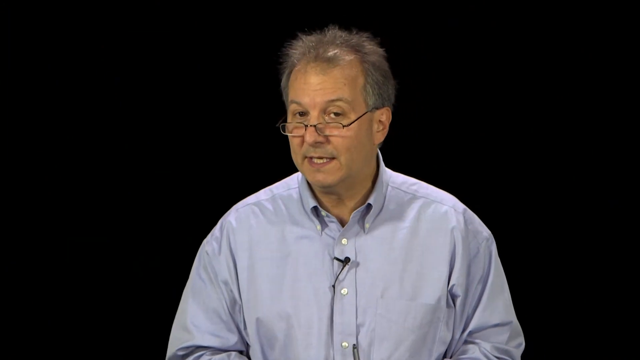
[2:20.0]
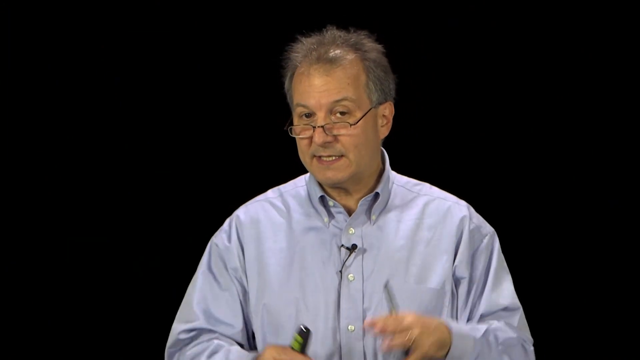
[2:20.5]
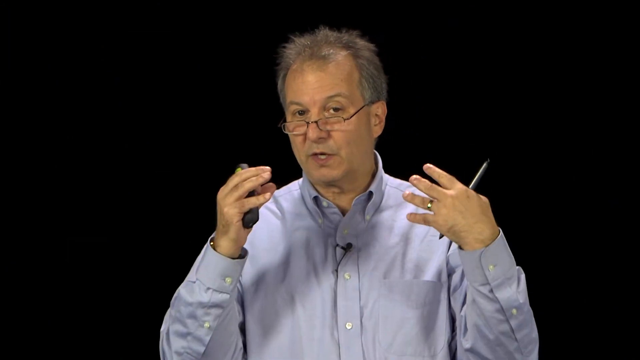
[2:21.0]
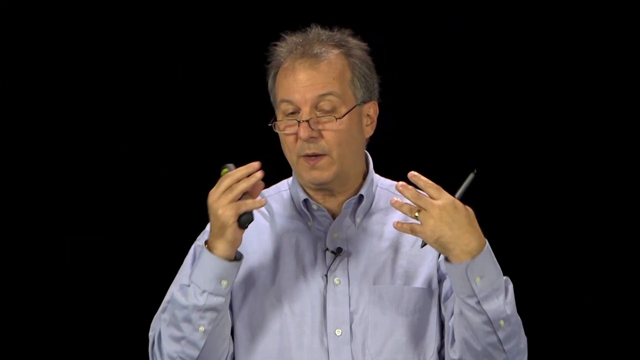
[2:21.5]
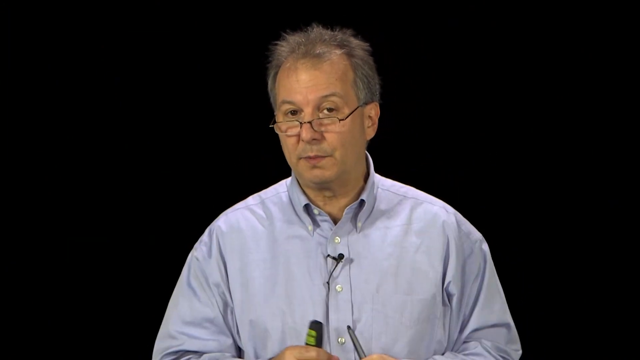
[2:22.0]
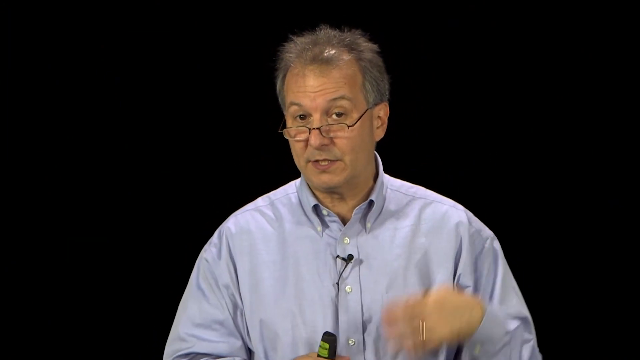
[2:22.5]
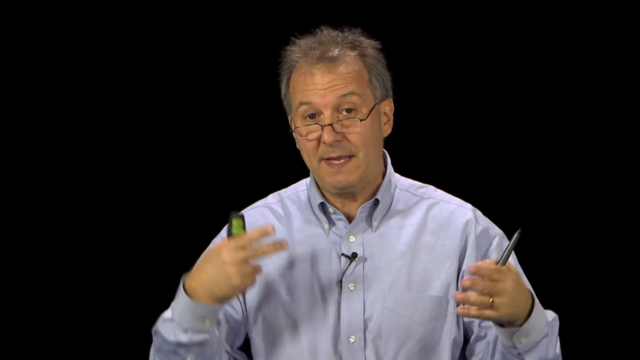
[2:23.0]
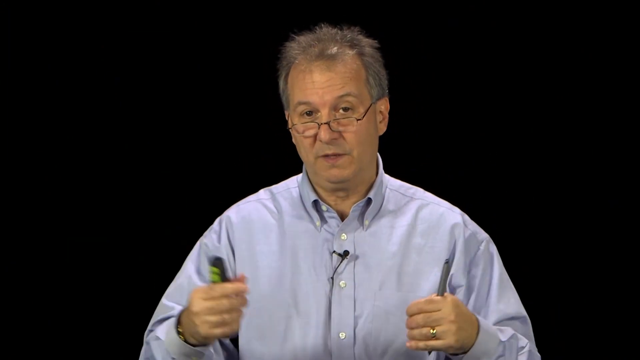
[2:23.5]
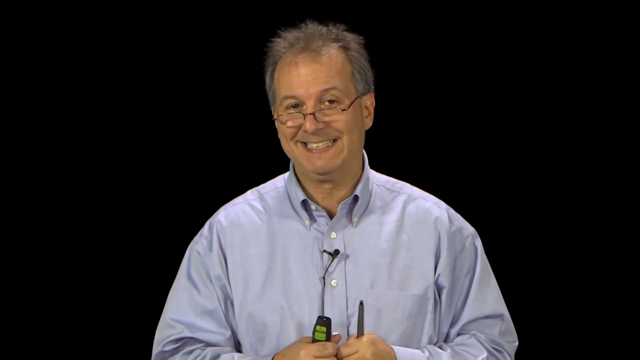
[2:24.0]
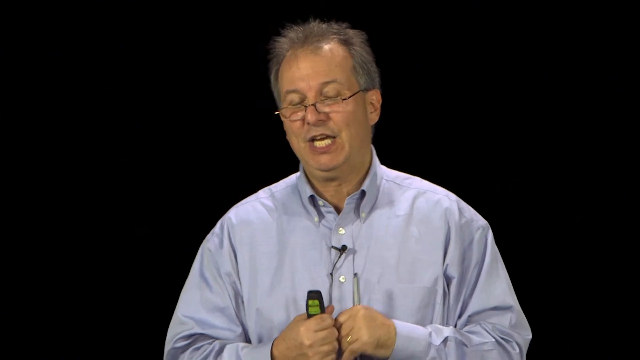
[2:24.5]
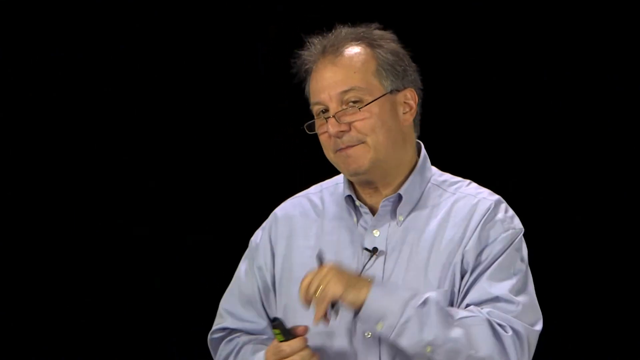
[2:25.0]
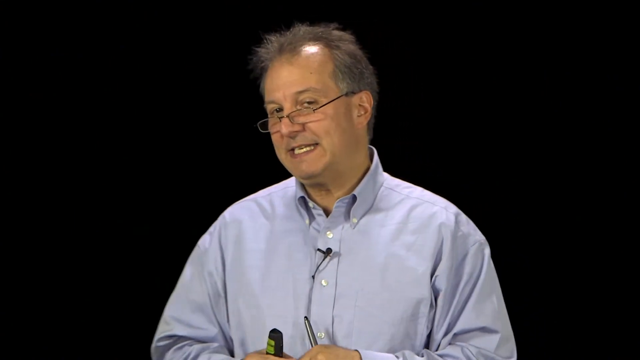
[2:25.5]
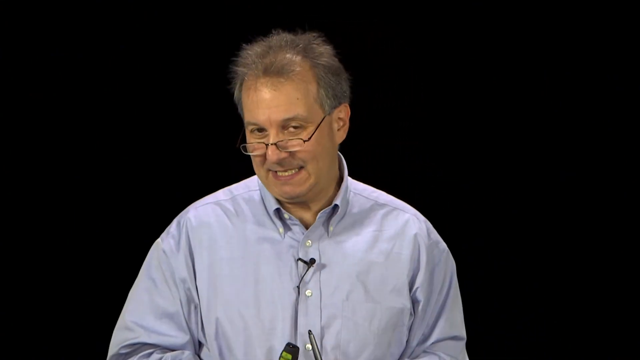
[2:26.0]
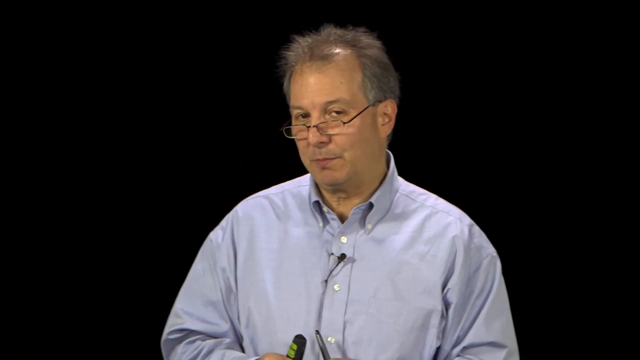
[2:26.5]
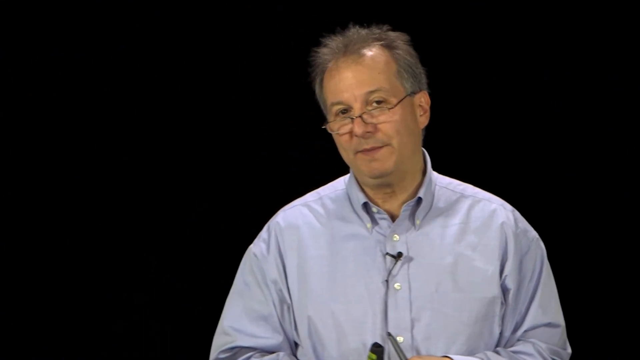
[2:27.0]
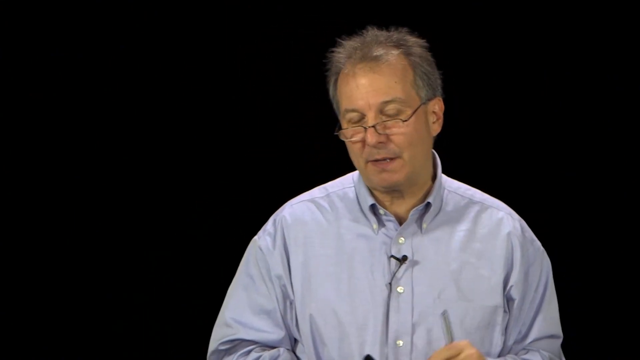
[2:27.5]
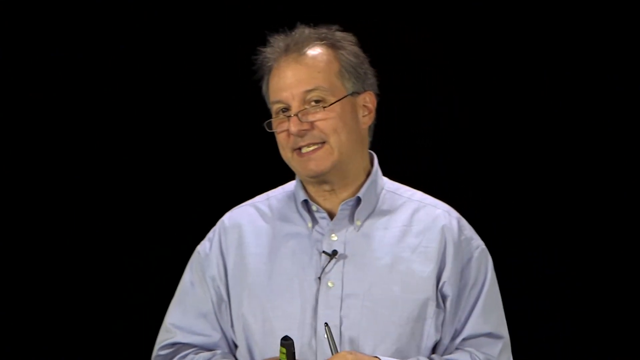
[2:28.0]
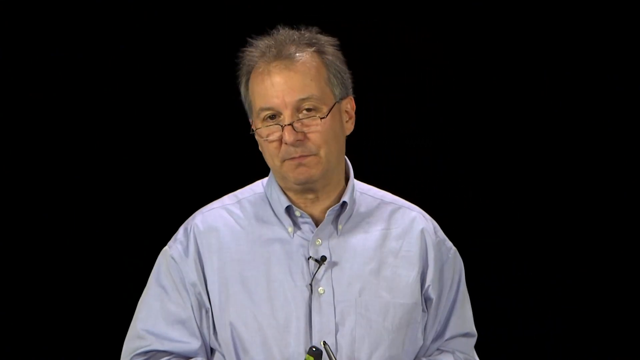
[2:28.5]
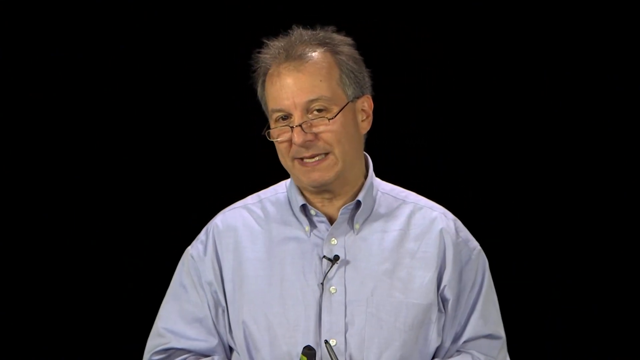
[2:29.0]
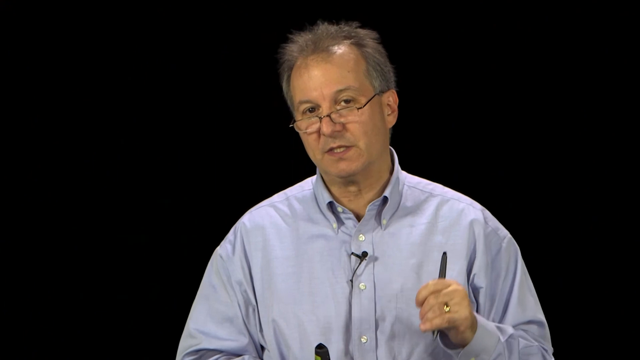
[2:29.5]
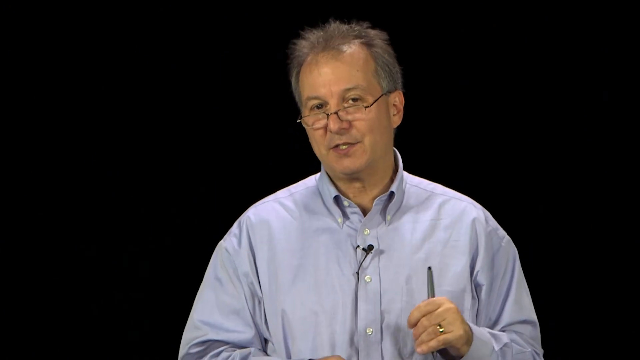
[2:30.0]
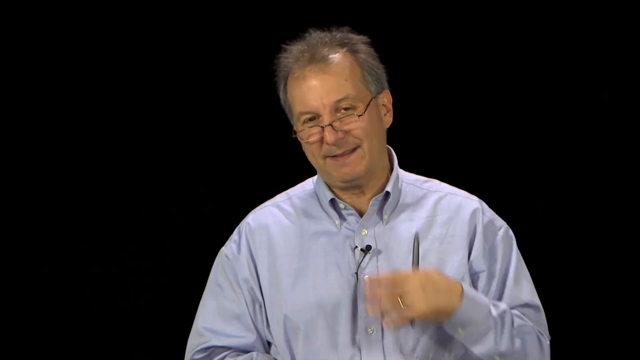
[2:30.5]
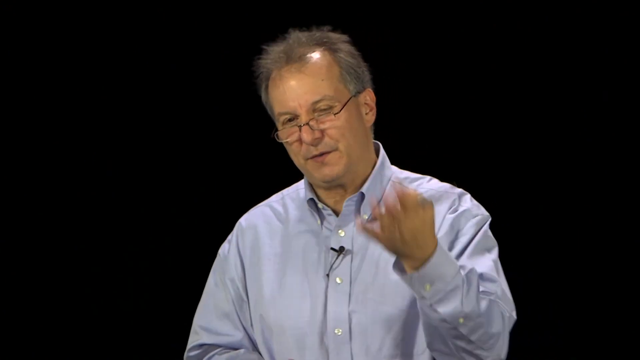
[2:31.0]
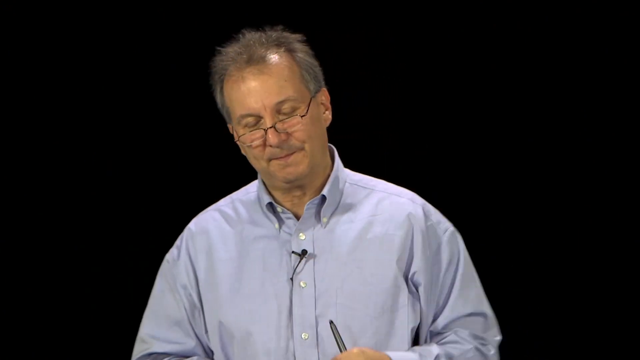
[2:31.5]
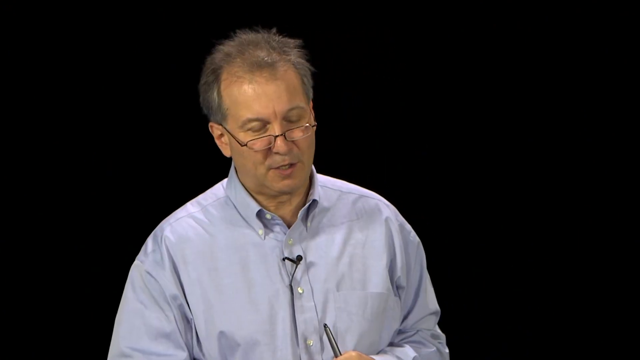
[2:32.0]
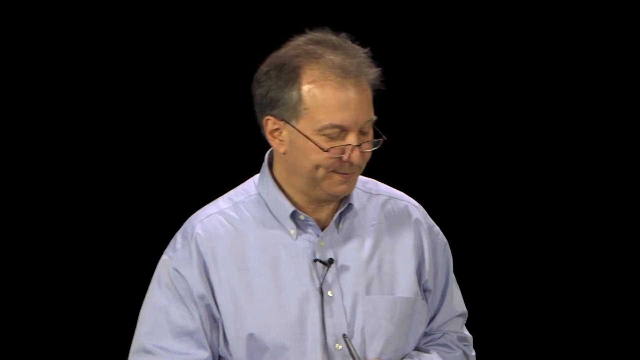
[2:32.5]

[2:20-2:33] Against a completely black background, the man speaks directly to the audience, wearing a light blue polo shirt with a microphone attached to it.